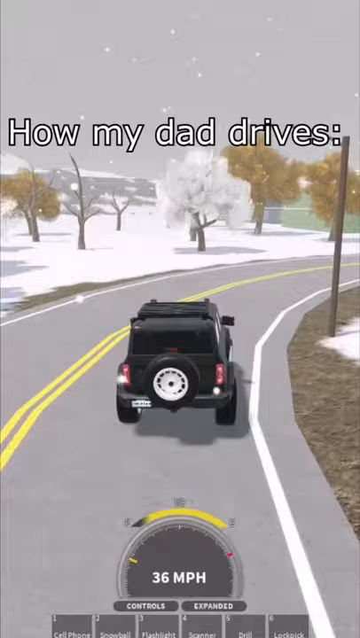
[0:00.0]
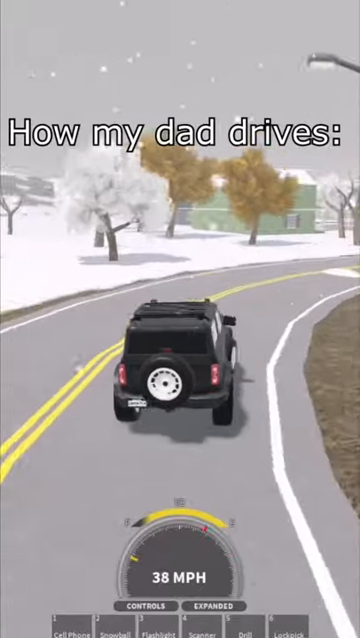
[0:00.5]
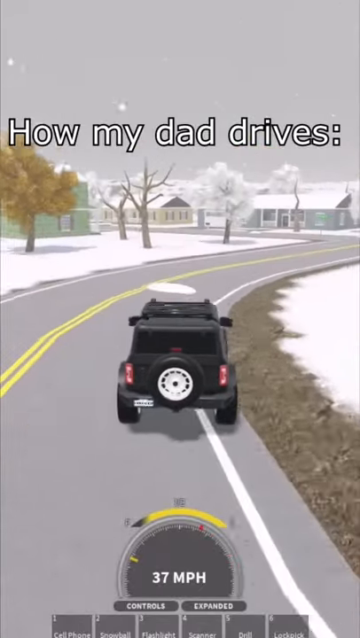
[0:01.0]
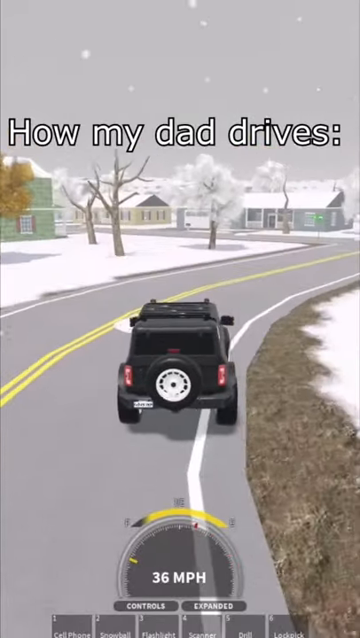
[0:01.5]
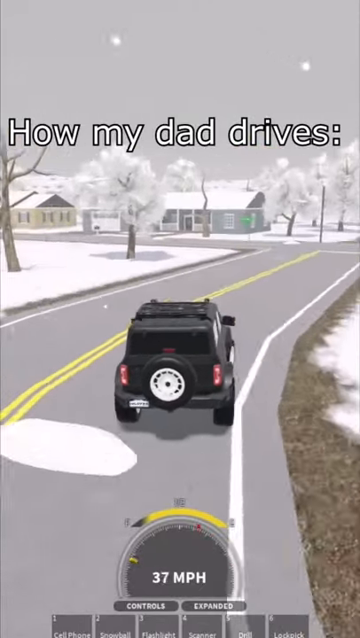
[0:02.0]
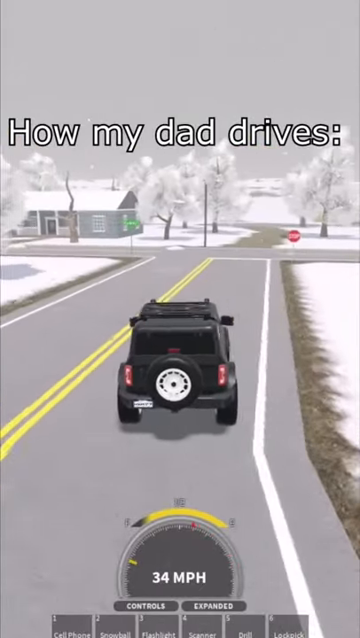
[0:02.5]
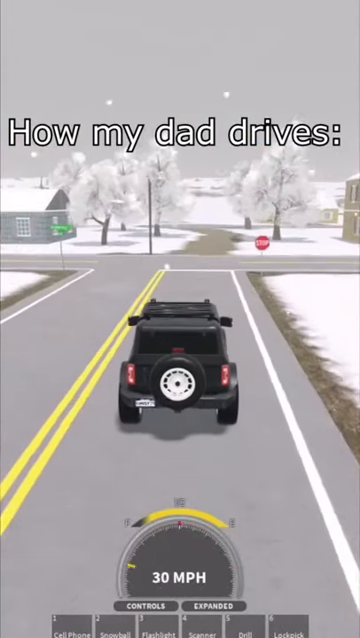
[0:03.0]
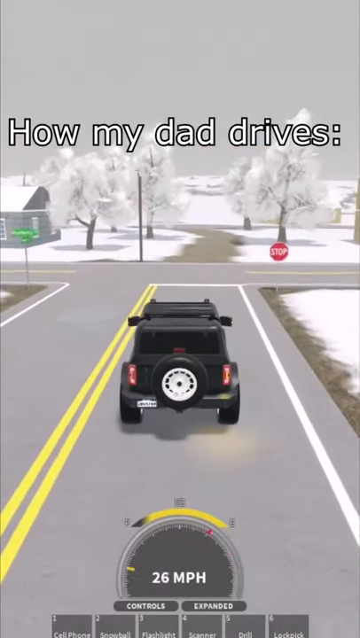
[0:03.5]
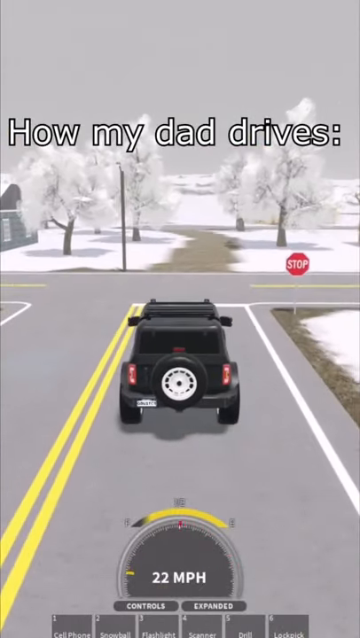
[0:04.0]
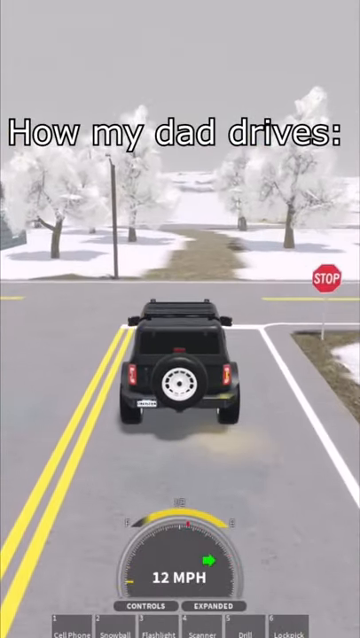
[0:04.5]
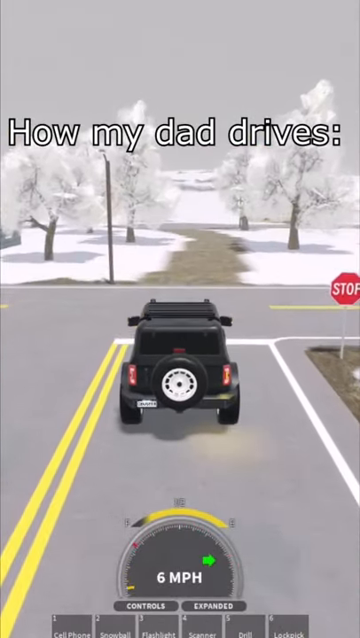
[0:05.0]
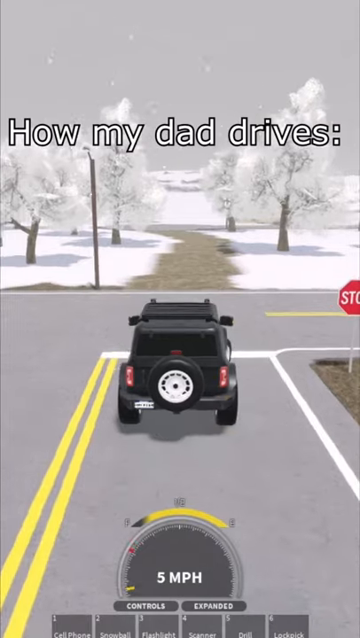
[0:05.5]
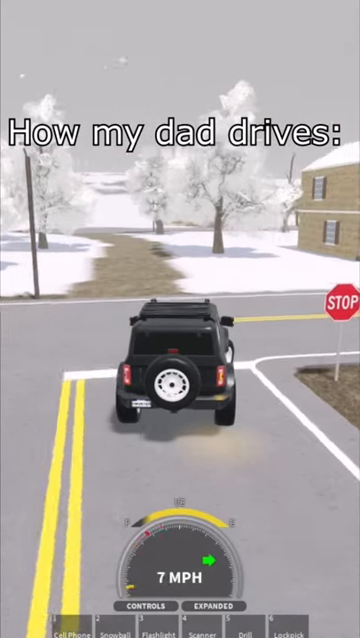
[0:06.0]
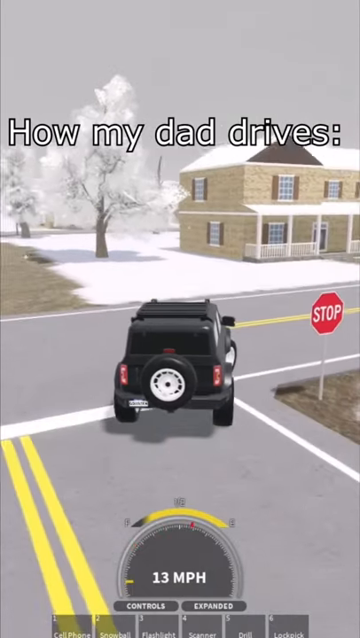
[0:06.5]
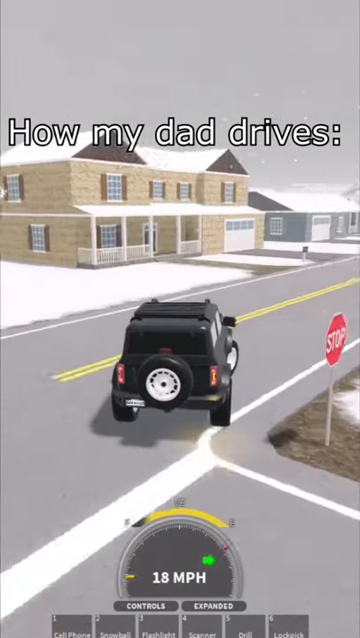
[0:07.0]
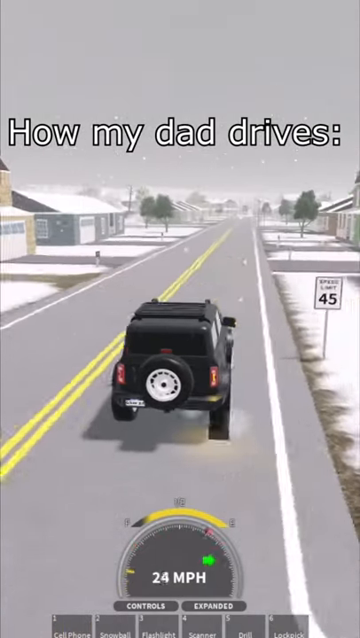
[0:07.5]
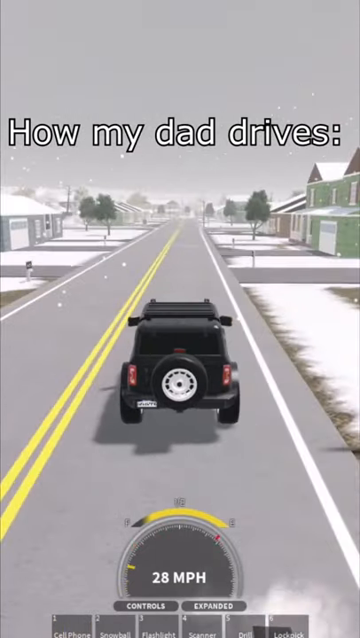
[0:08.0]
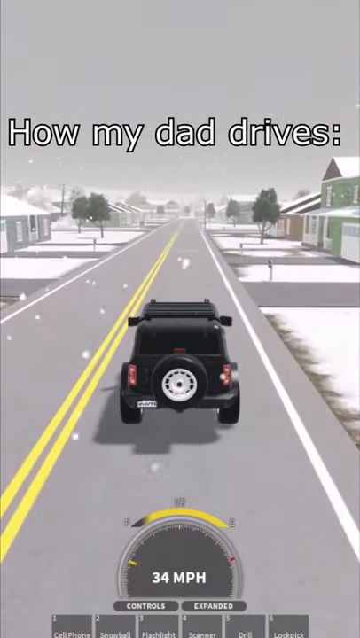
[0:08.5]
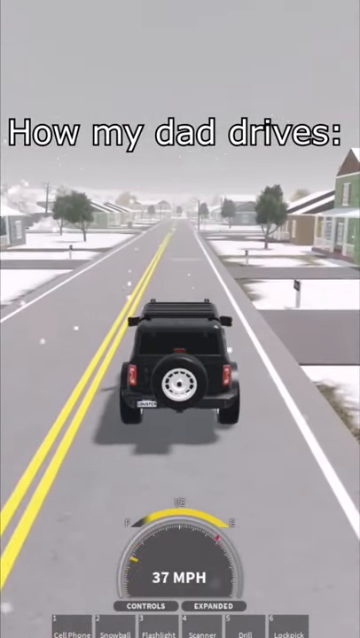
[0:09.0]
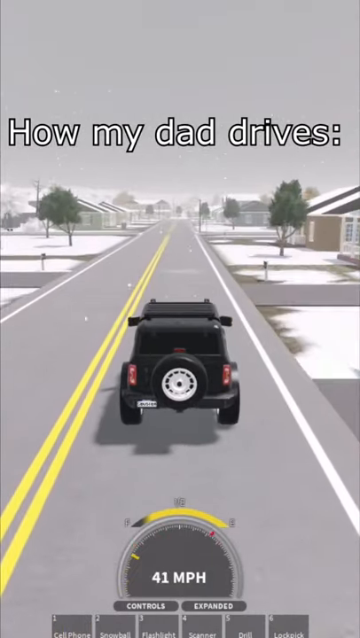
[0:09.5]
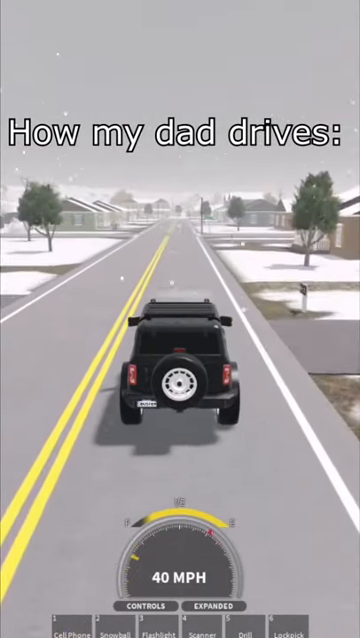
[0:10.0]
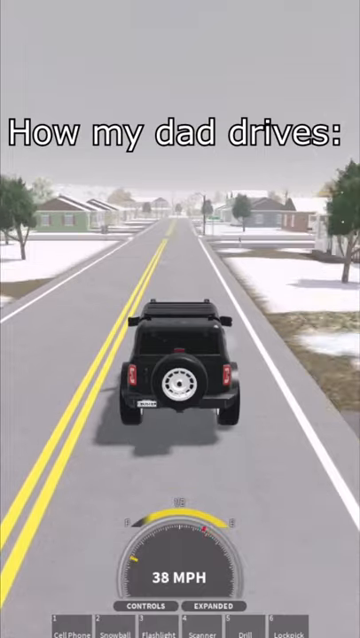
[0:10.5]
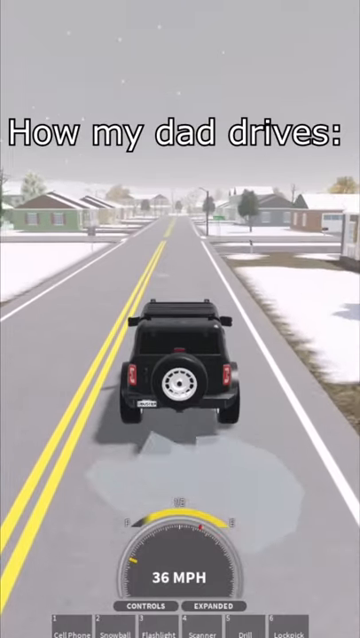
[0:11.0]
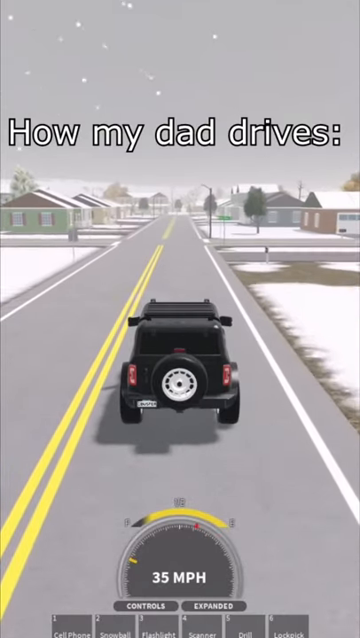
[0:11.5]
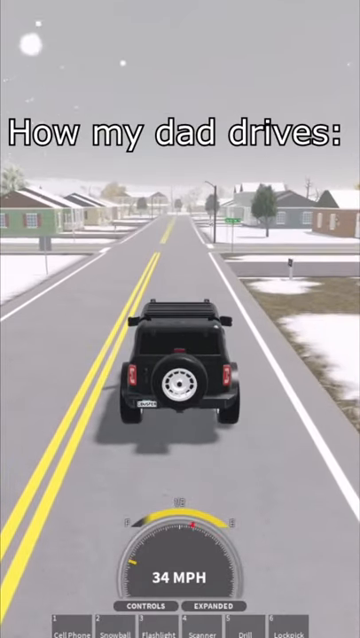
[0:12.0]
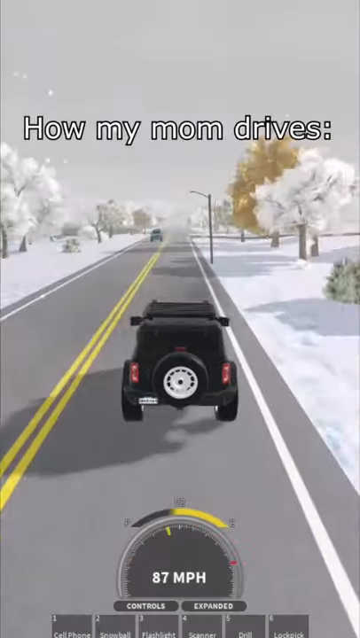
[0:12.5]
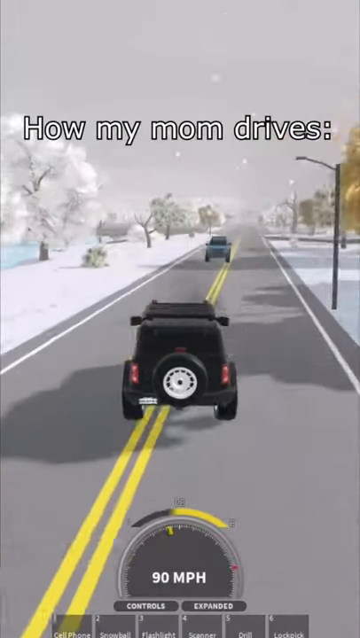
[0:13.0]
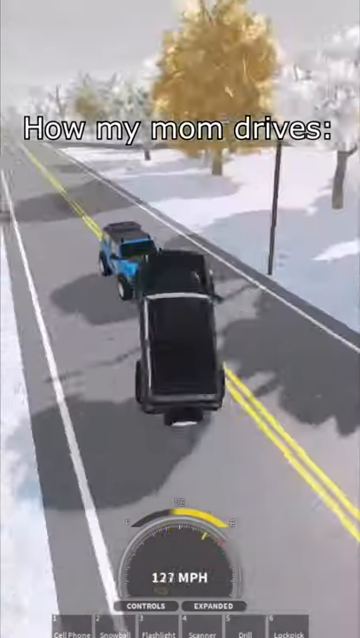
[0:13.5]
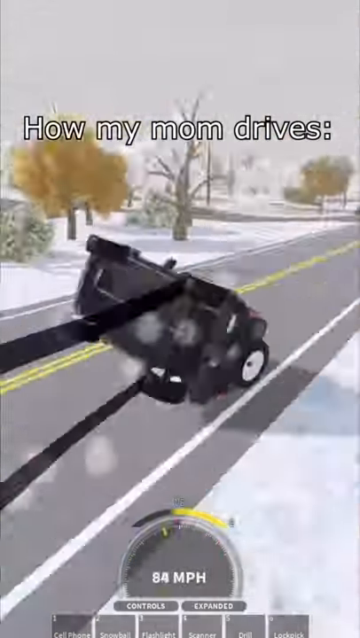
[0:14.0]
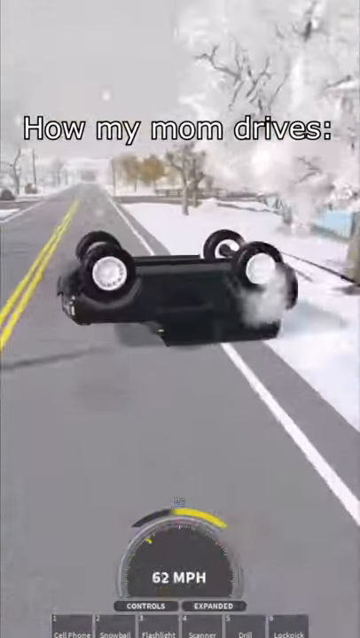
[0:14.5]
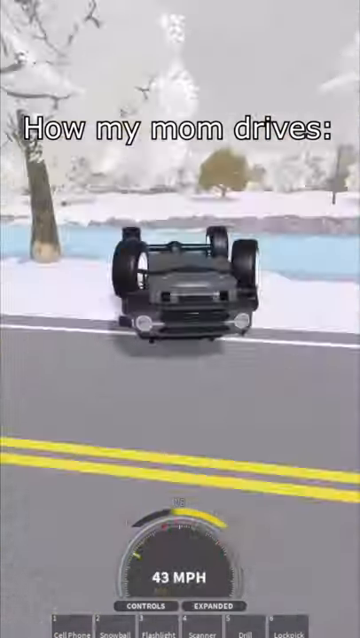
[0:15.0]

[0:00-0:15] Video game footage shows a black Hummer driving on a street, with a picture of a speedometer at the bottom of the screen. The Hummer is driving in a town in the middle of a snowstorm, with houses on the left and right sides of the screen. It swerves over into the left lane and crashes into a blue oncoming vehicle. The town has different colored trees: some are brown and dead in the winter, while others are covered in white snow. The roofs and front yards of the houses on both sides of the street are snow covered. There are stop signs on the streets. A white tire is on the back of the black Hummer. Across the screen, text reads "How my dad drives."